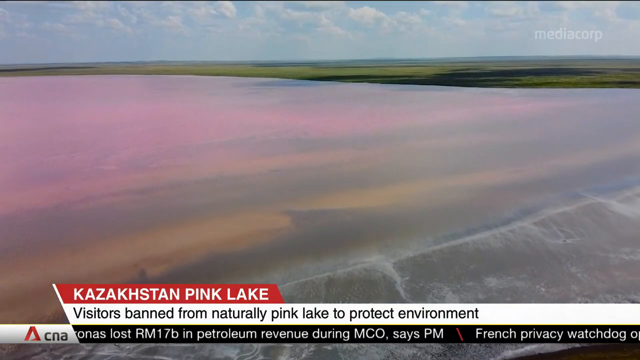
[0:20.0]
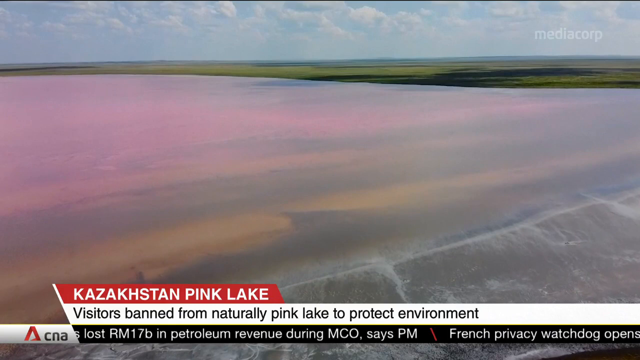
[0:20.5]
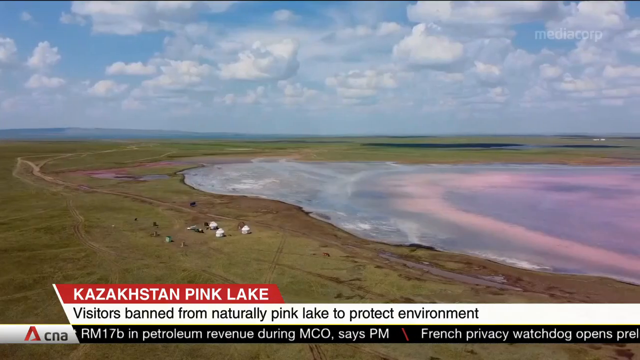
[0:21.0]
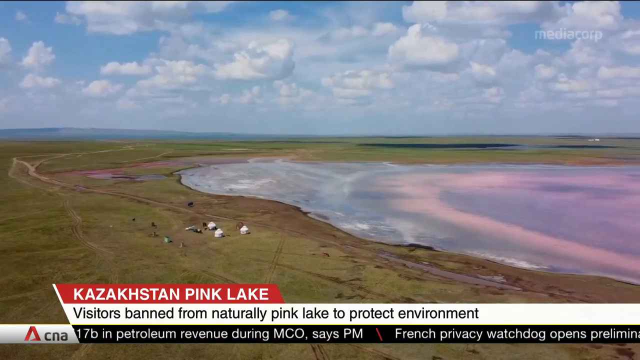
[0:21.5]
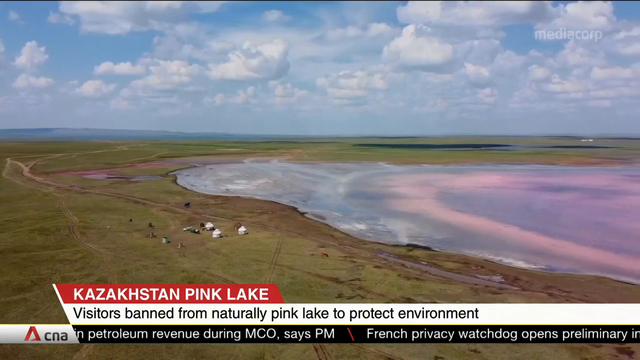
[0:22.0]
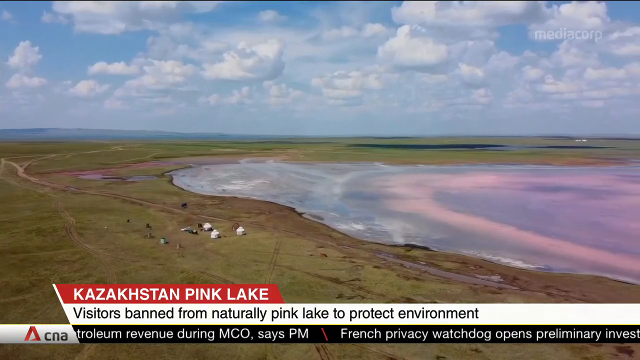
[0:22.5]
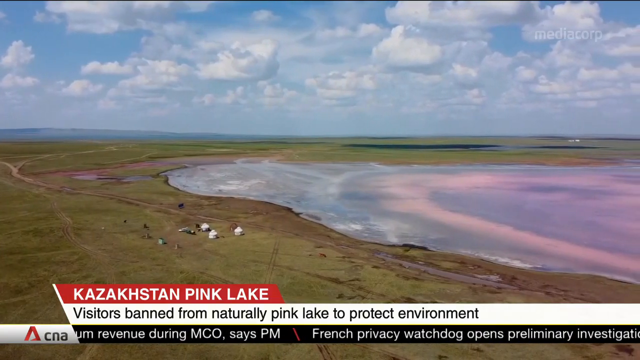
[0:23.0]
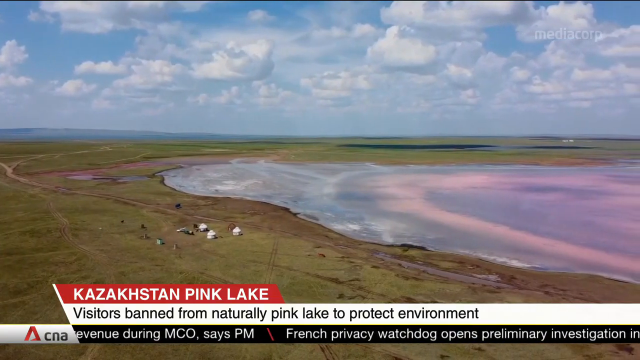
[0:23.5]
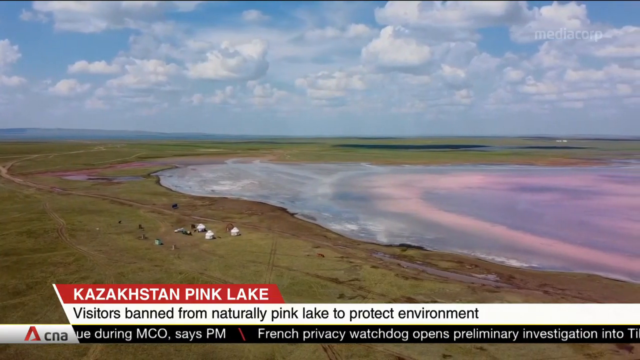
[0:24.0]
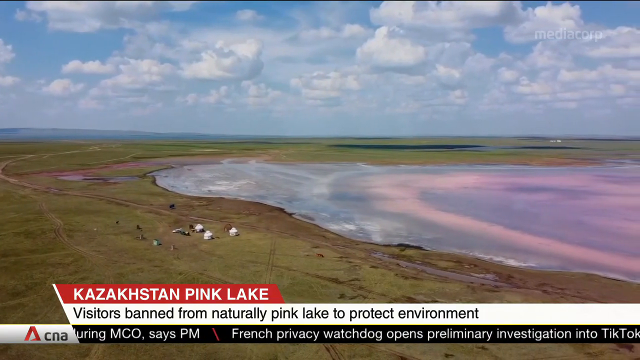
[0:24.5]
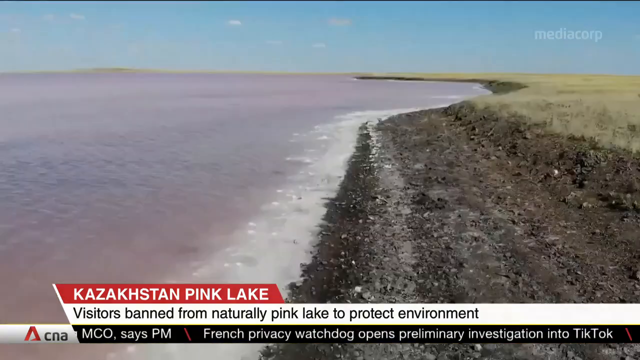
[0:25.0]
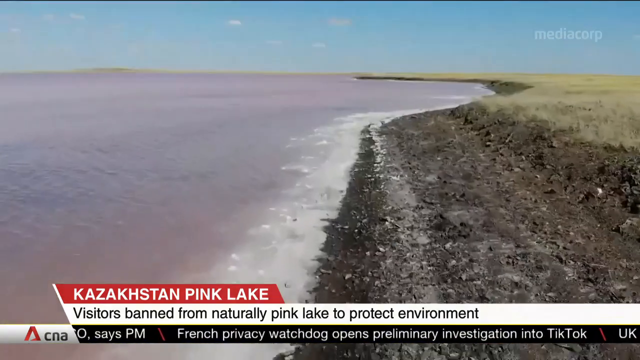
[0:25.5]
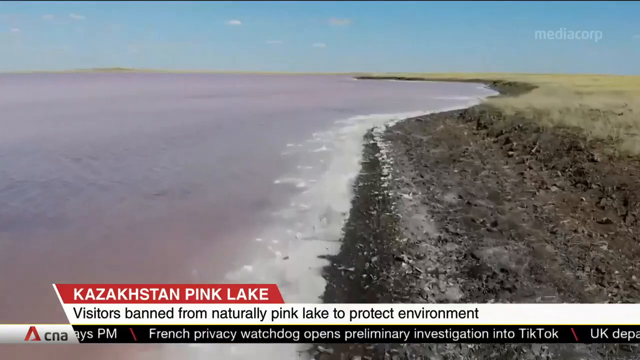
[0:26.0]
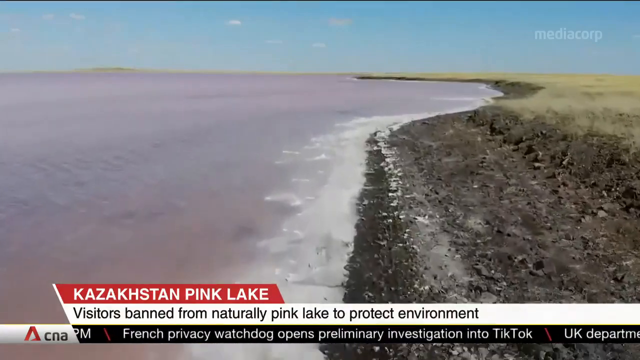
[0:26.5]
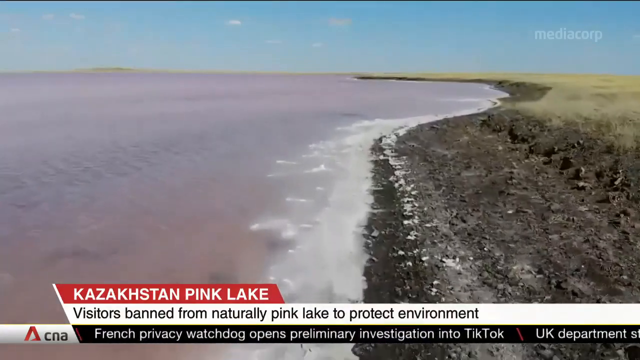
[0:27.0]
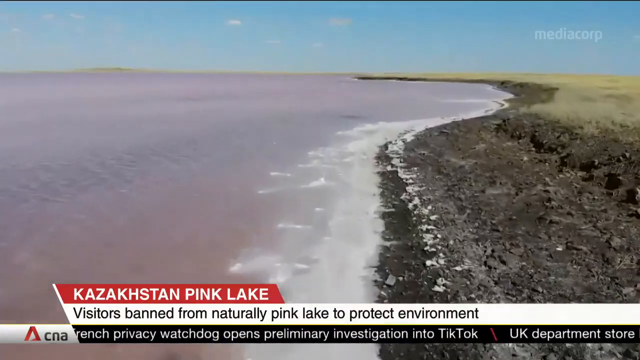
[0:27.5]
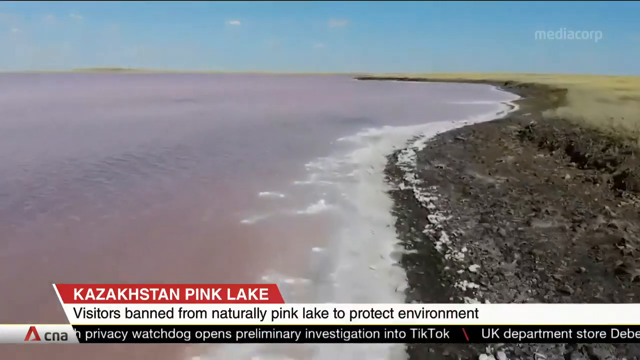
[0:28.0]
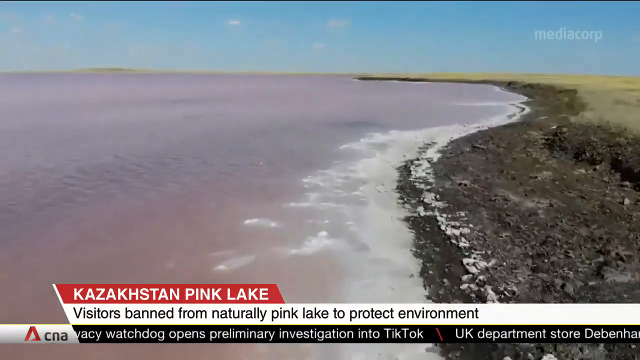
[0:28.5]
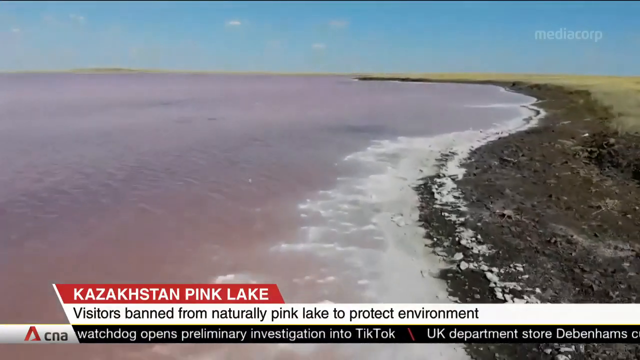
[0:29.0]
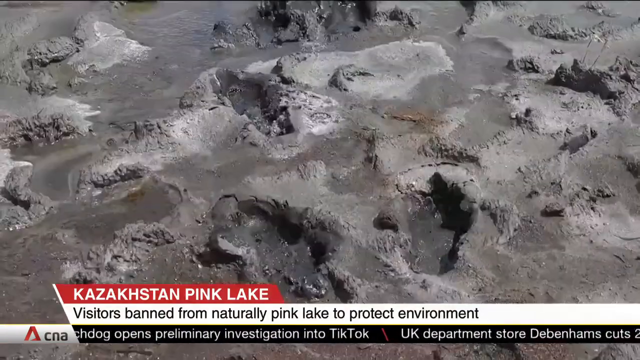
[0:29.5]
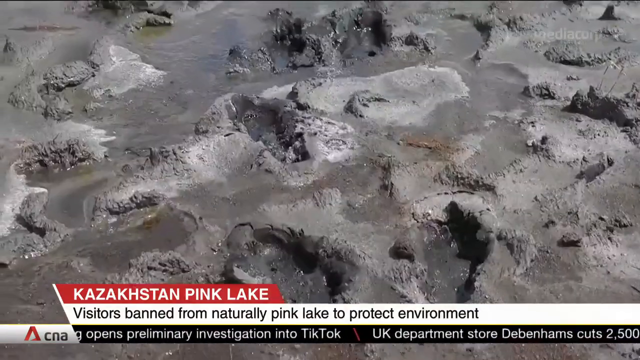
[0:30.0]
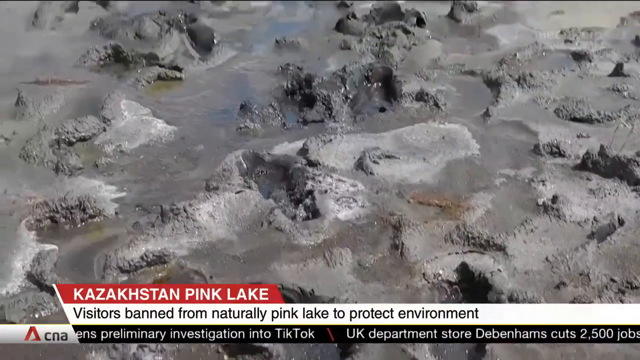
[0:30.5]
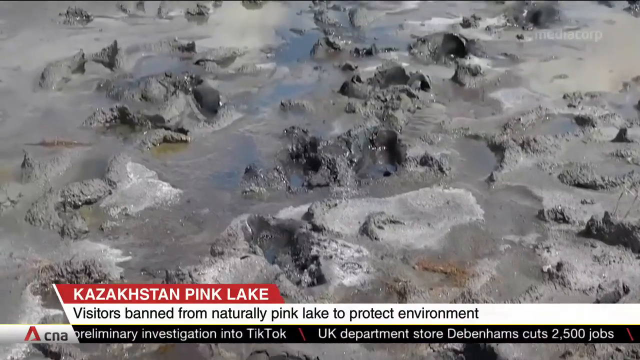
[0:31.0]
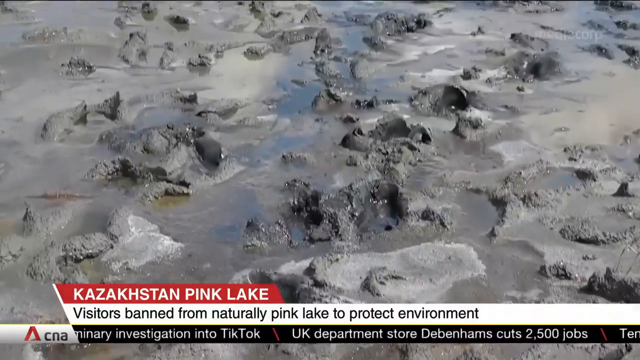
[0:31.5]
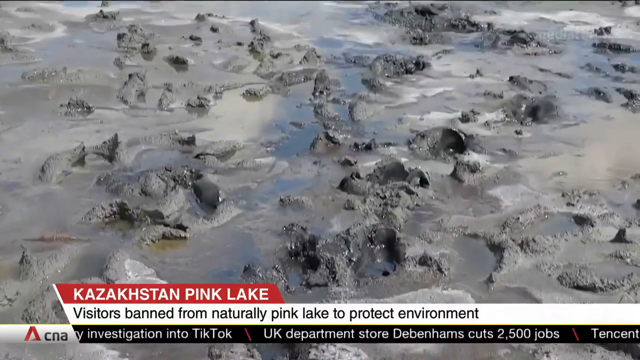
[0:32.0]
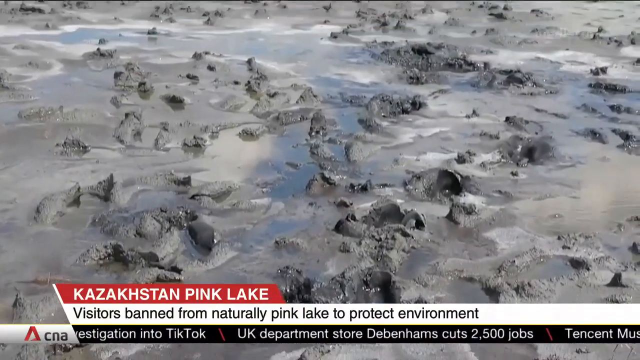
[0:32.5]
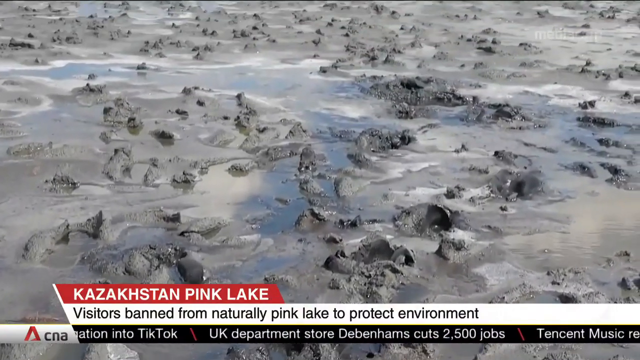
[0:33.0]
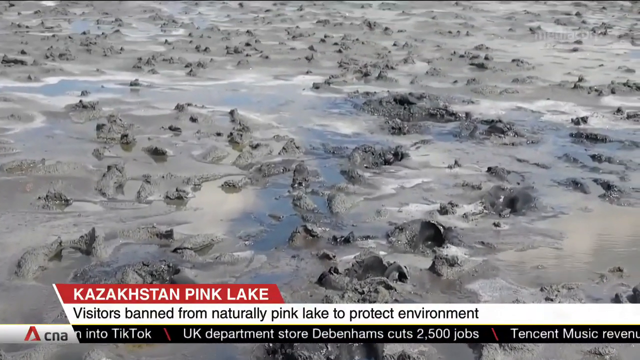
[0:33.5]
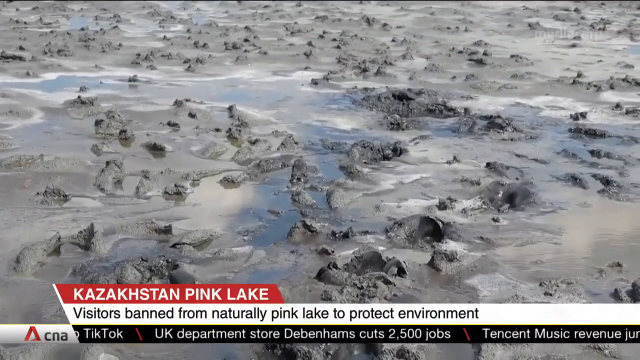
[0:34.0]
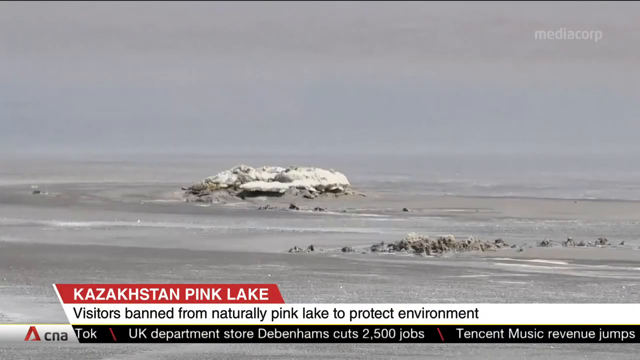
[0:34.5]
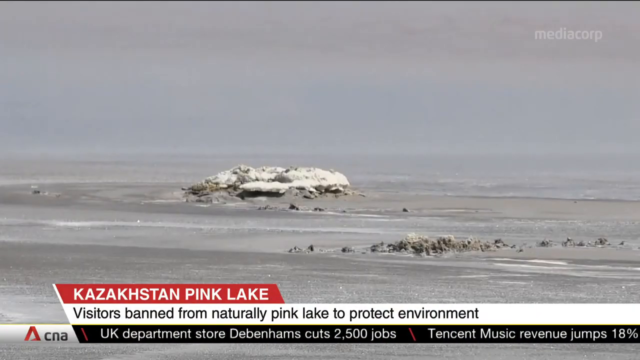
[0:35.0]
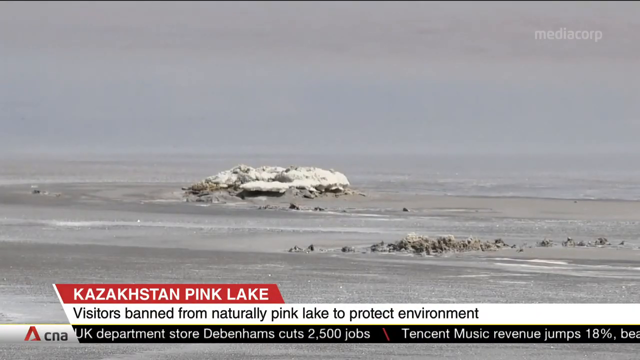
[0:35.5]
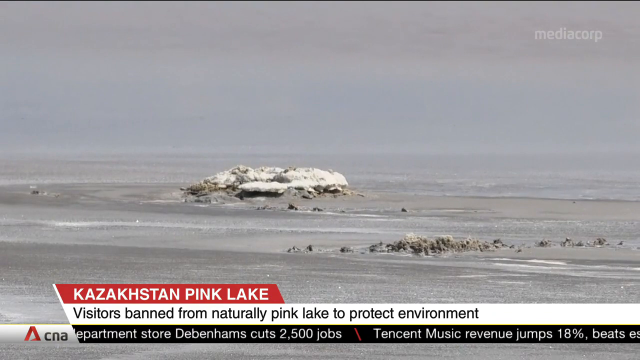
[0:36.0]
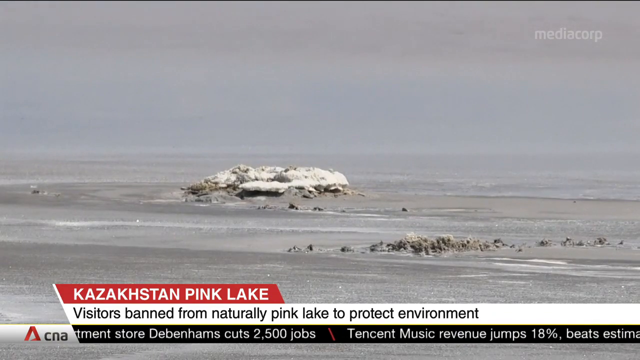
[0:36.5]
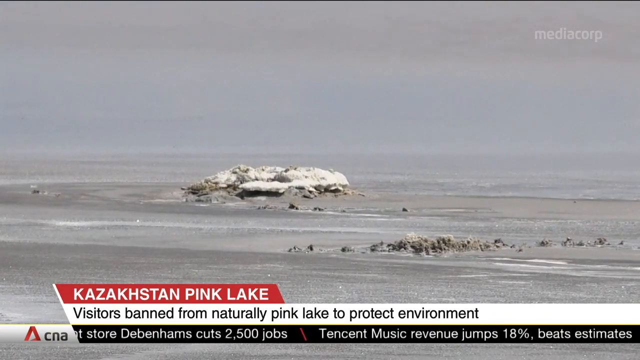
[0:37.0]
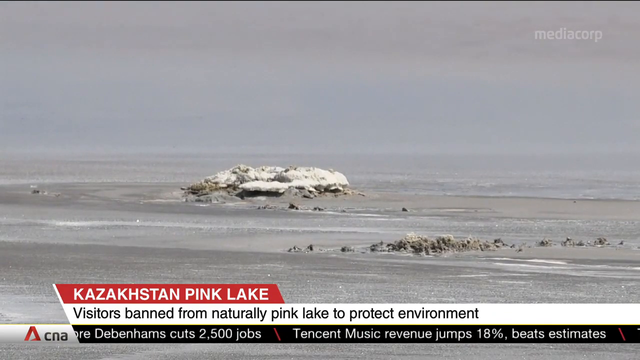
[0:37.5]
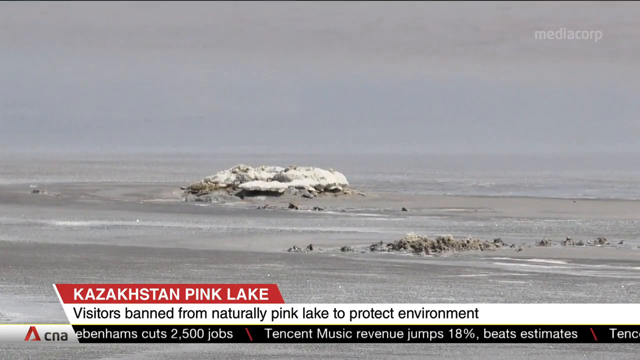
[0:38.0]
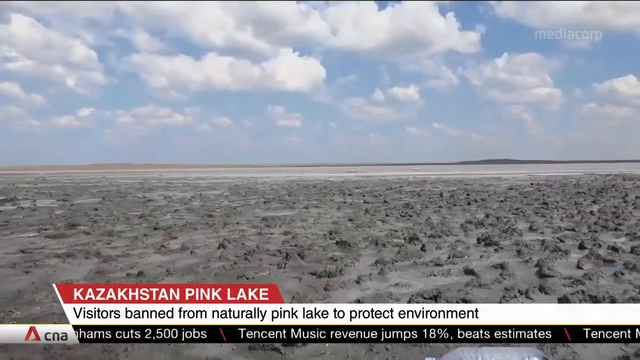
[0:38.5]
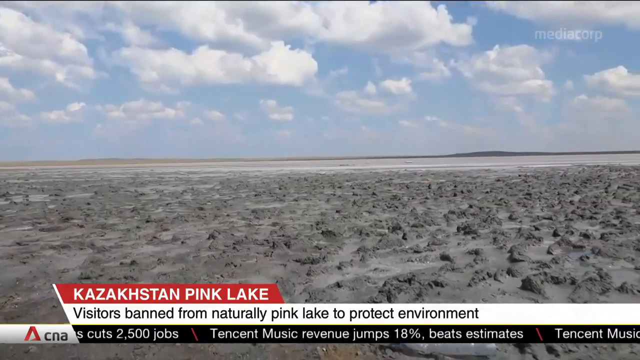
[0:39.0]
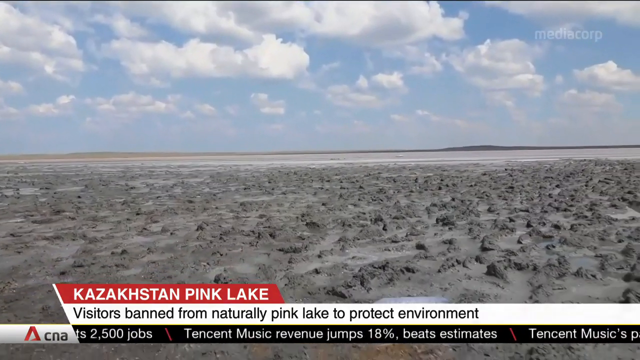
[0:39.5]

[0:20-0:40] A drone view shows the lake in a remote area that looks very rural, surrounded by green grassy land. Part of the lake has receded, leaving dark mud, and a water bottle is sitting on its side on the bed where the water has receded. The bottom banner still shows "Kazakhstan Pink Lake" and below it "visitors banned from naturally pink lake to protect the environment". Toward the end, an aerial view from the shore of the lake shows the pink-hued water, and in the distance there is something like a marshland and other areas of water that are not pink.